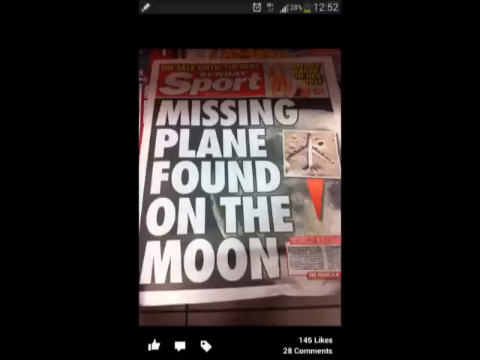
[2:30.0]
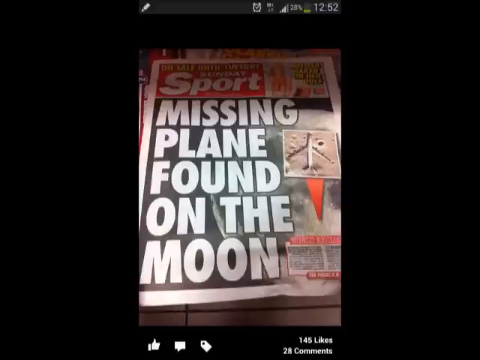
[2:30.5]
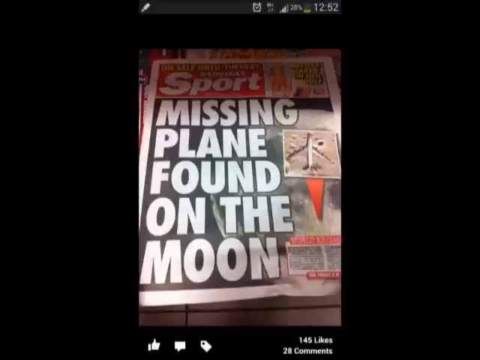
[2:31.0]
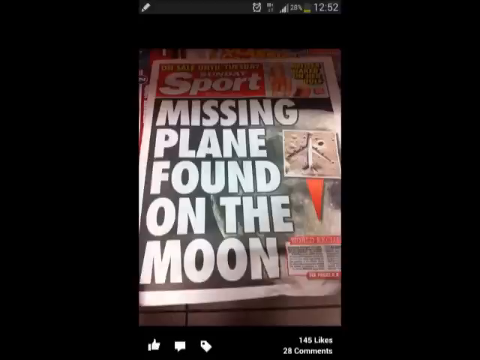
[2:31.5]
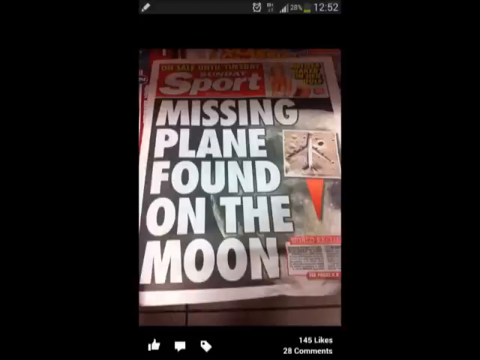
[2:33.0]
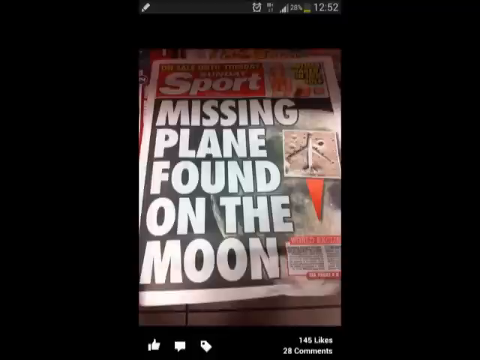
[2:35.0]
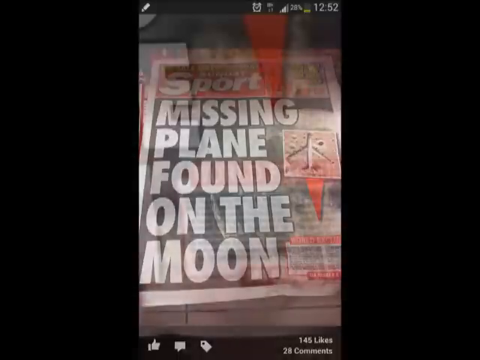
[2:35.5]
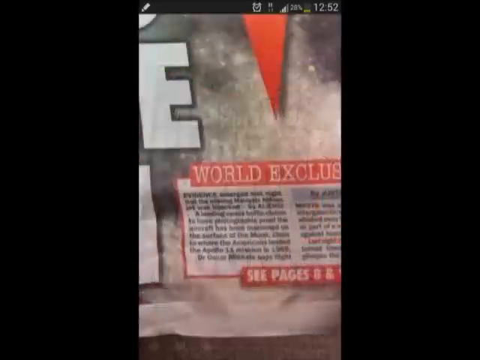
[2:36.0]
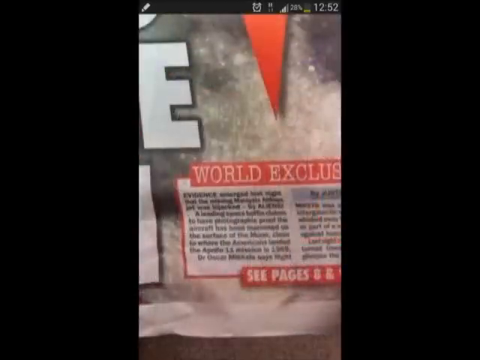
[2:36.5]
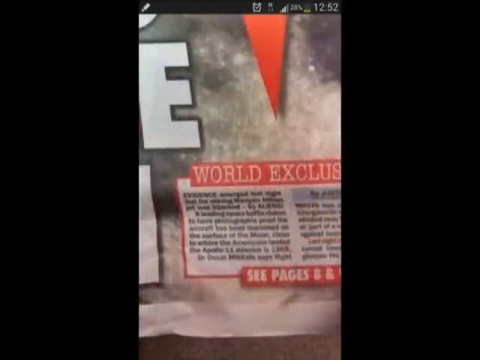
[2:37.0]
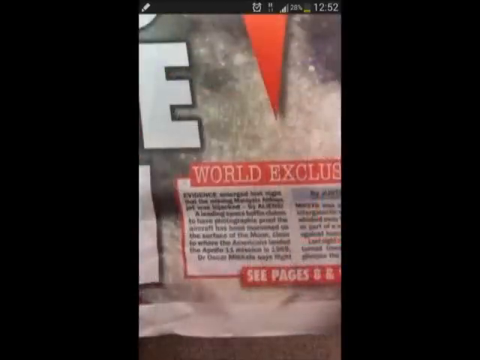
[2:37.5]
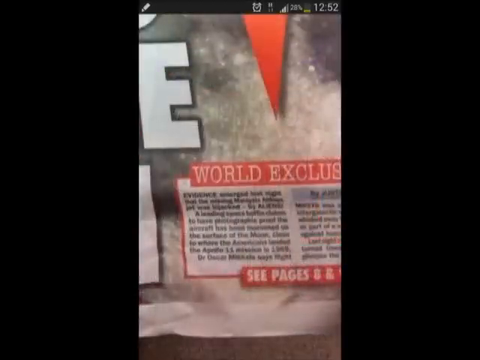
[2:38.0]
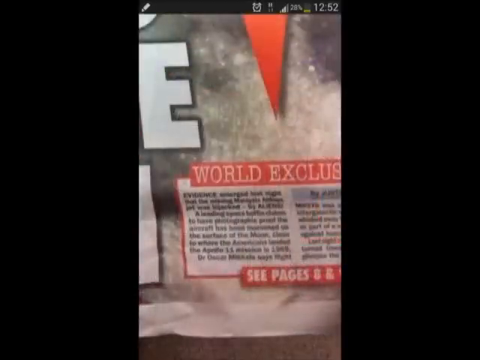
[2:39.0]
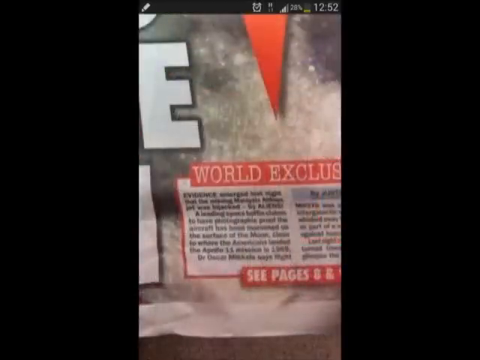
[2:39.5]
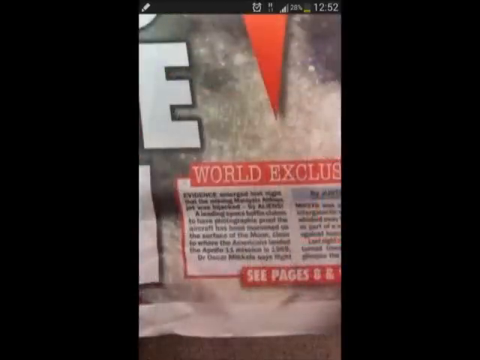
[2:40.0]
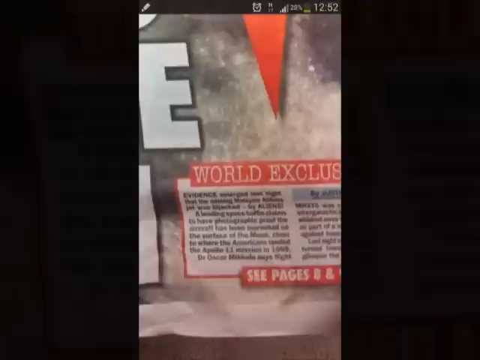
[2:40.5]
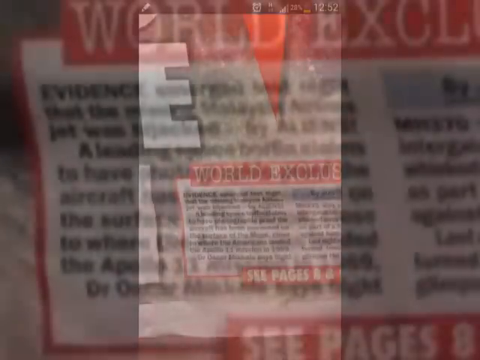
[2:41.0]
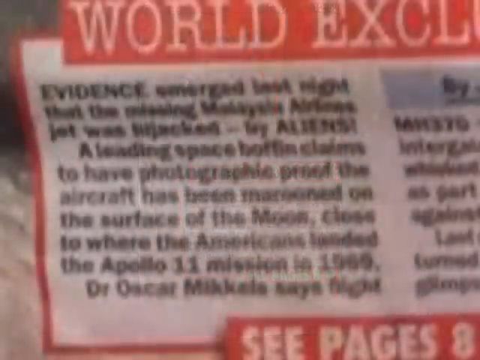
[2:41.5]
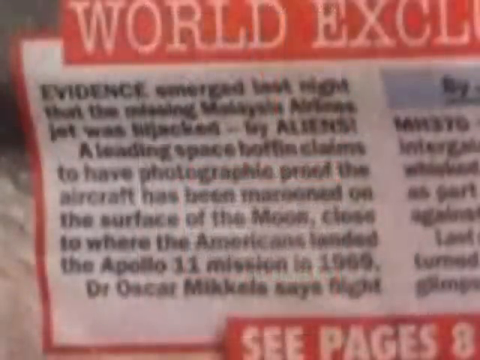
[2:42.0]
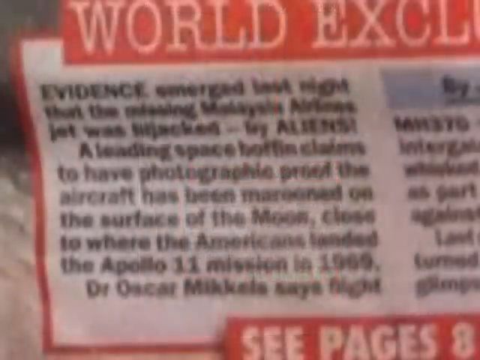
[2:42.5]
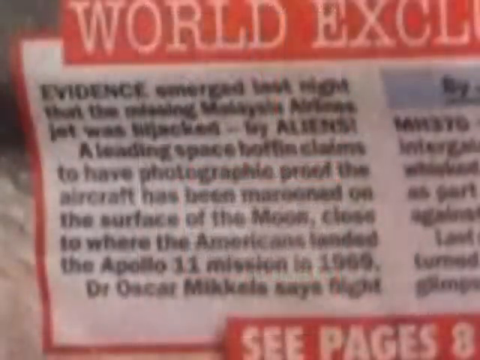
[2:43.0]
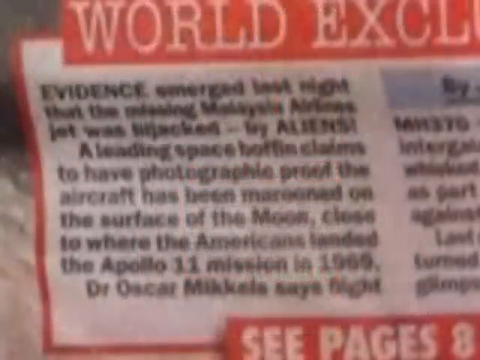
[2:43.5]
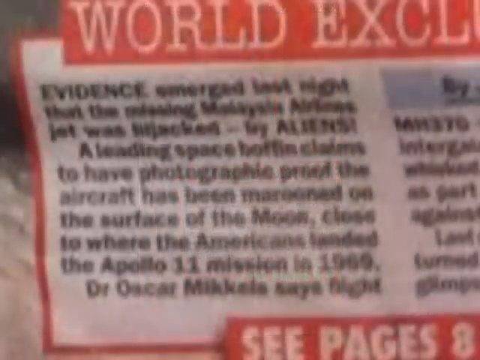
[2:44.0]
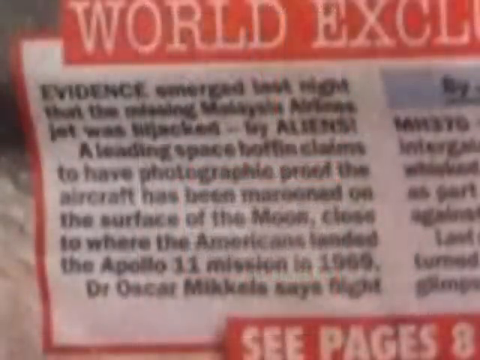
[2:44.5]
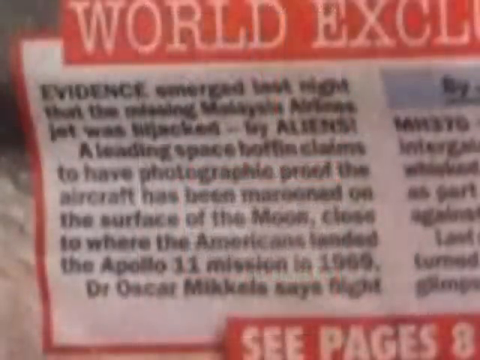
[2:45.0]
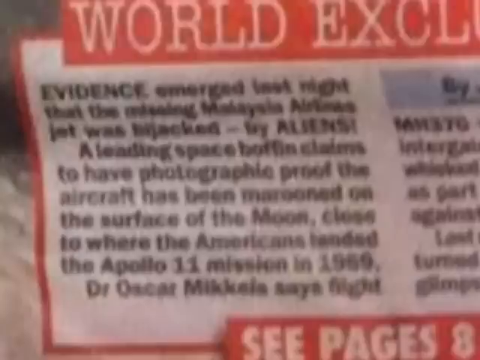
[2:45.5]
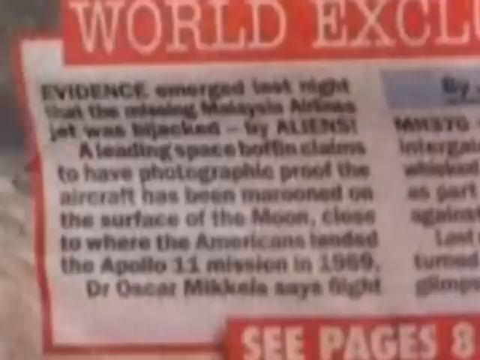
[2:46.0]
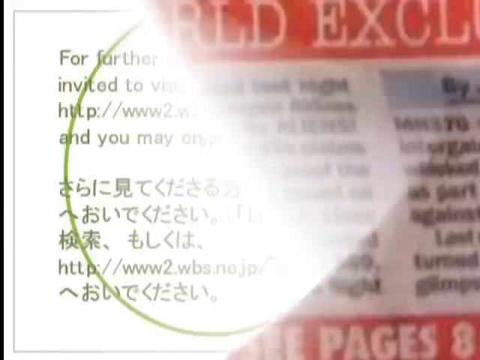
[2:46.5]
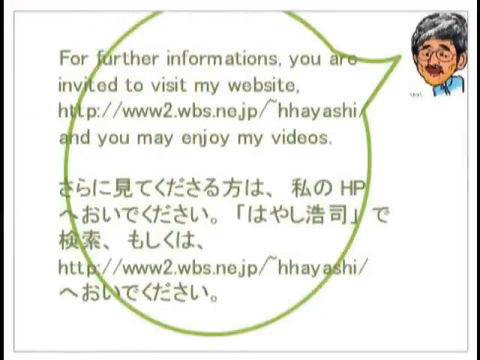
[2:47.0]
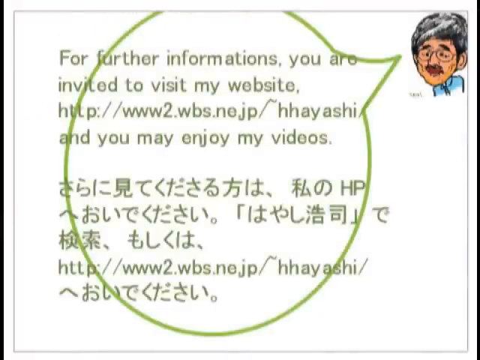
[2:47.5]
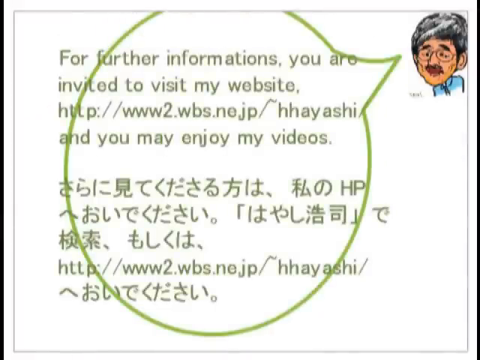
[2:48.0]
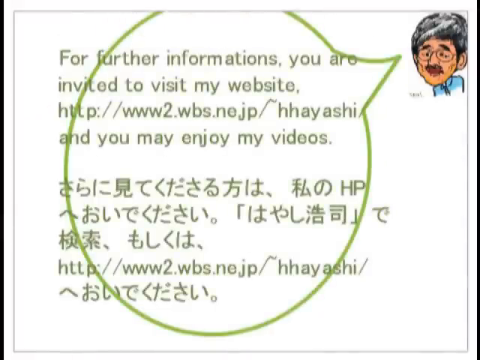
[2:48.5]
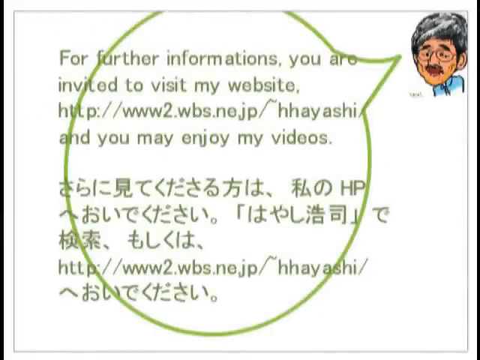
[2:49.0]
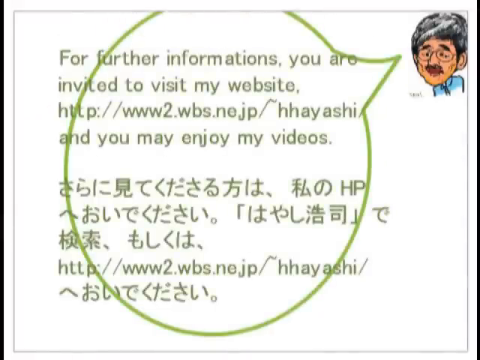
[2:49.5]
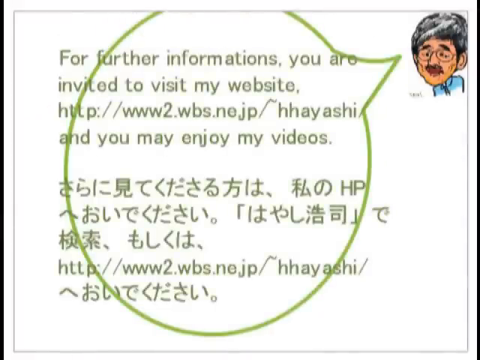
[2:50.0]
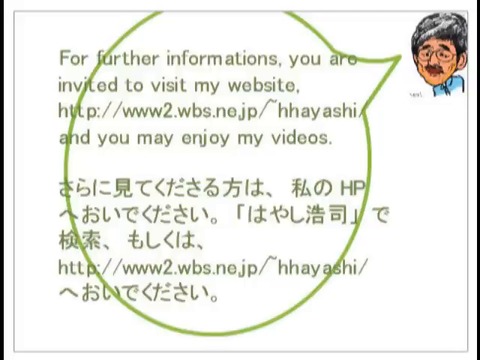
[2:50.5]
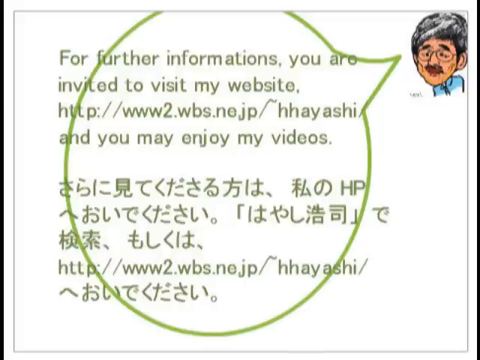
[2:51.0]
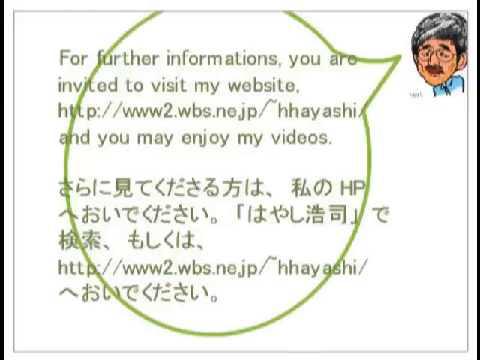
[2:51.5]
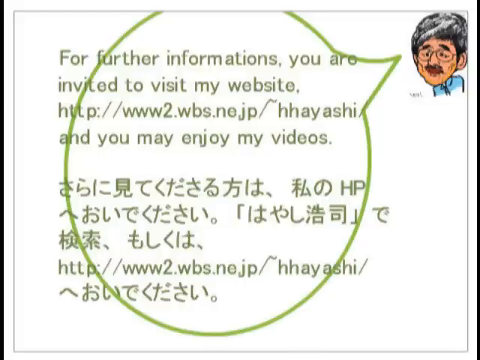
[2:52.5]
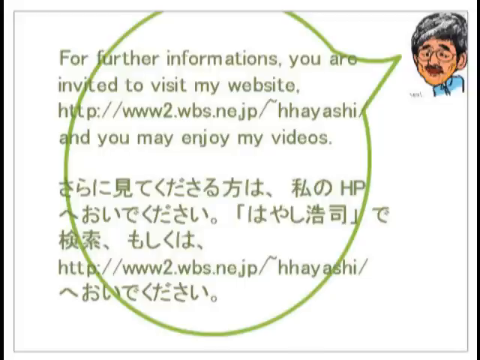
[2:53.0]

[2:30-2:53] A slightly zoomed-out image of the sports magazine shows "Missing plane found on the moon," with a caption in the bottom right-hand corner presenting proposed evidence of the plane. An up-close image of this proposed evidence follows; the small excerpt states that aliens may have hijacked the plane and flown it to the moon. The next screen reads "for further information. You are invited to visit my website" followed by a web address for H. Hayashi, and "you may enjoy my videos."